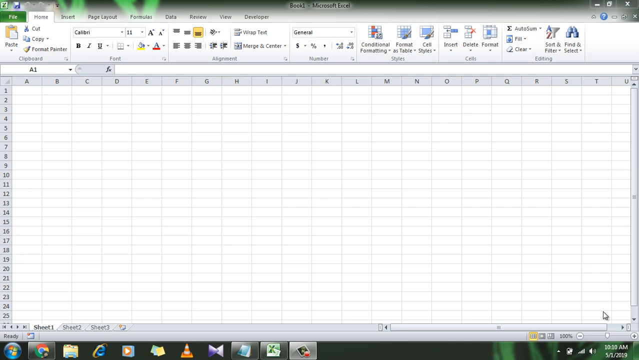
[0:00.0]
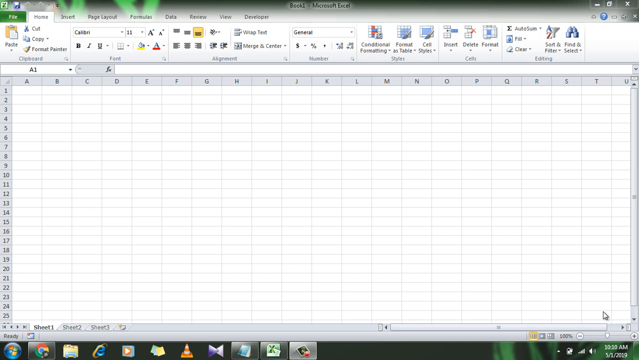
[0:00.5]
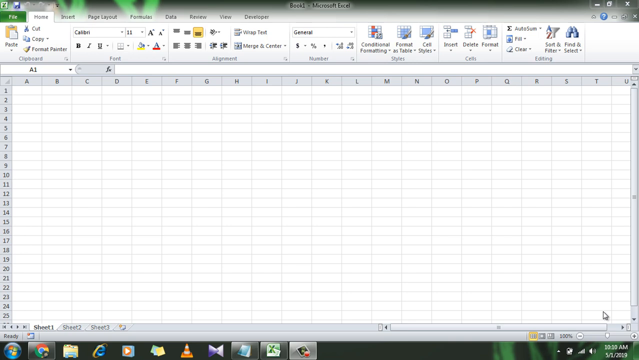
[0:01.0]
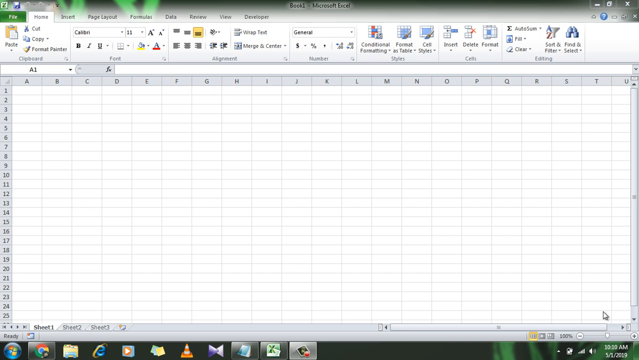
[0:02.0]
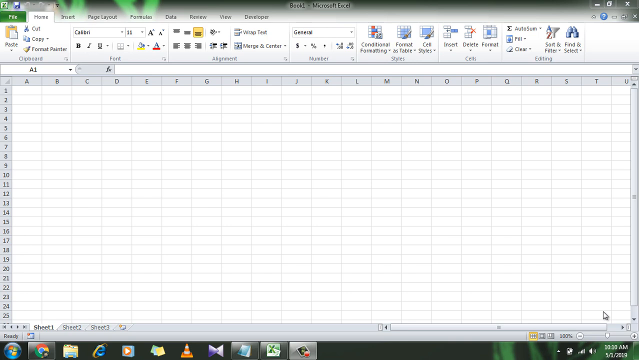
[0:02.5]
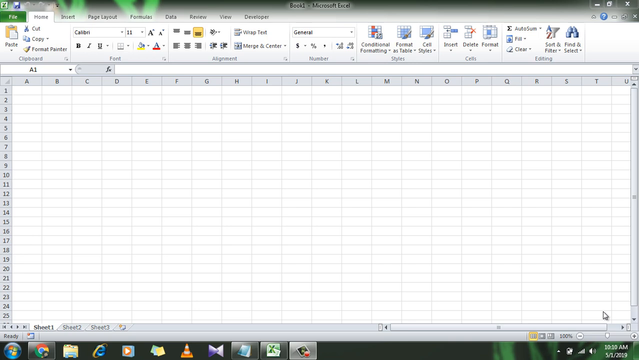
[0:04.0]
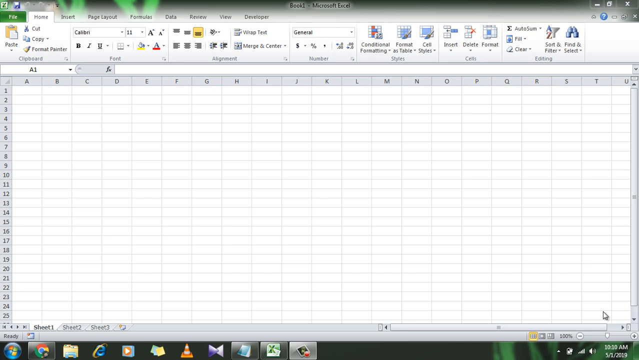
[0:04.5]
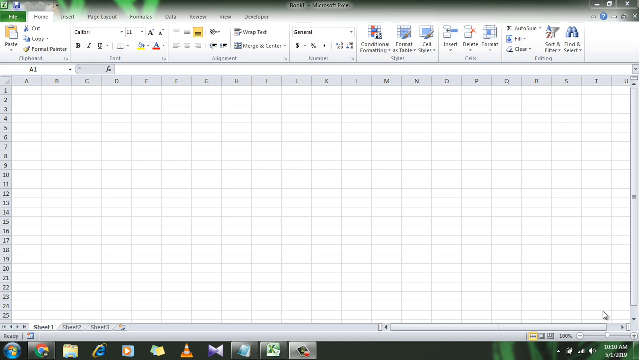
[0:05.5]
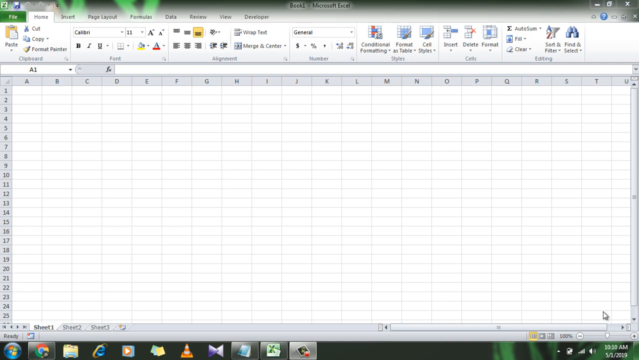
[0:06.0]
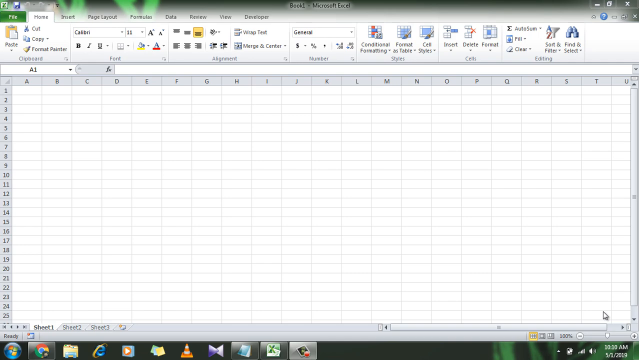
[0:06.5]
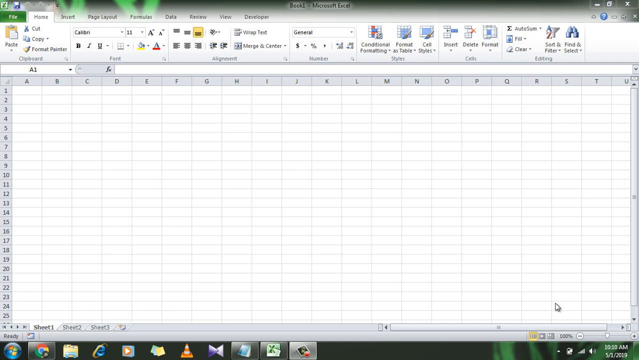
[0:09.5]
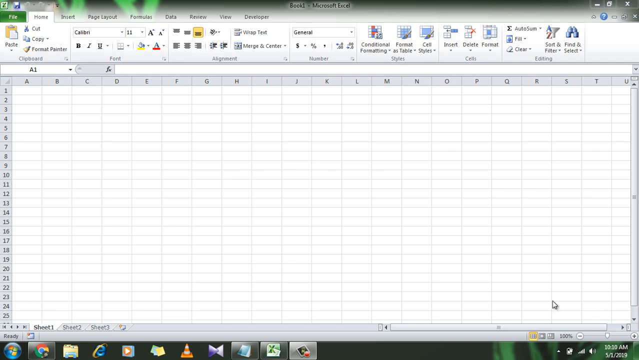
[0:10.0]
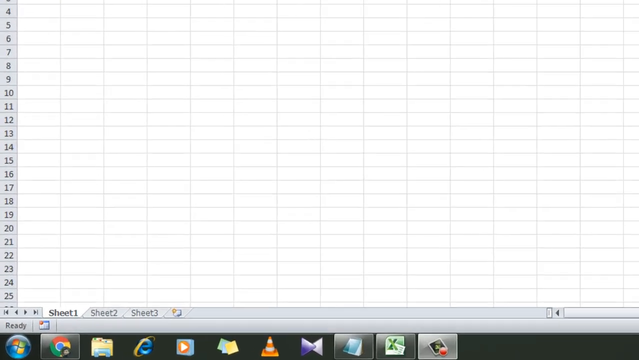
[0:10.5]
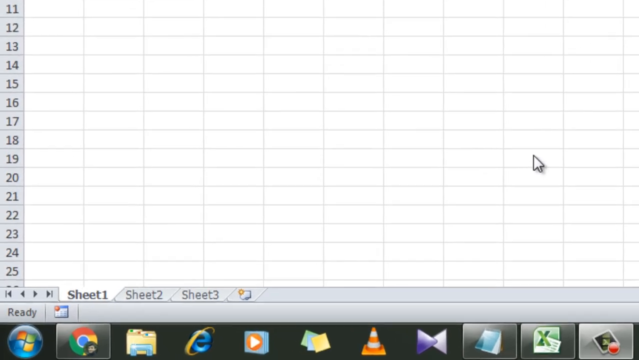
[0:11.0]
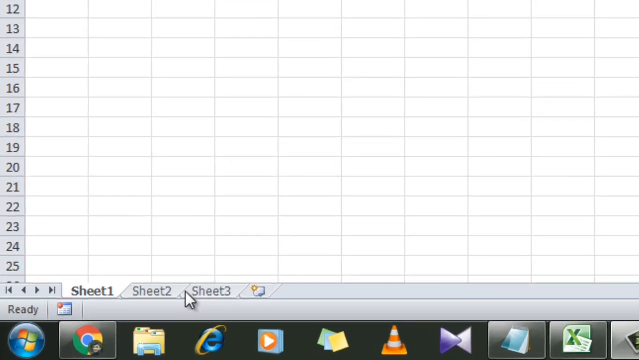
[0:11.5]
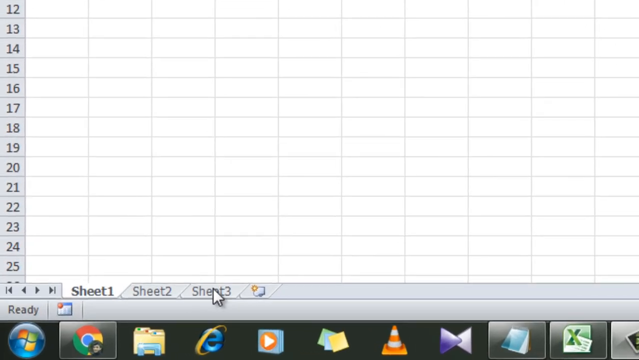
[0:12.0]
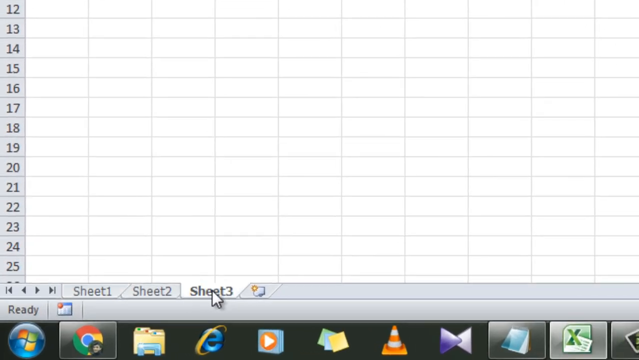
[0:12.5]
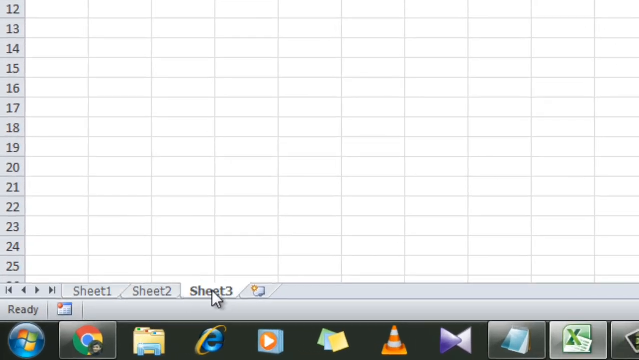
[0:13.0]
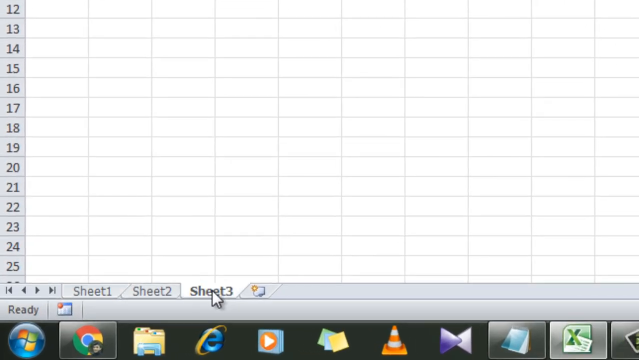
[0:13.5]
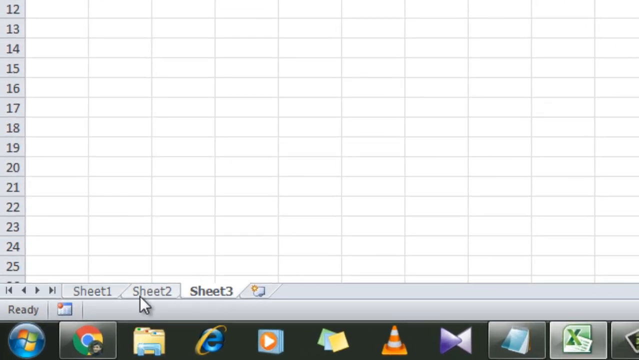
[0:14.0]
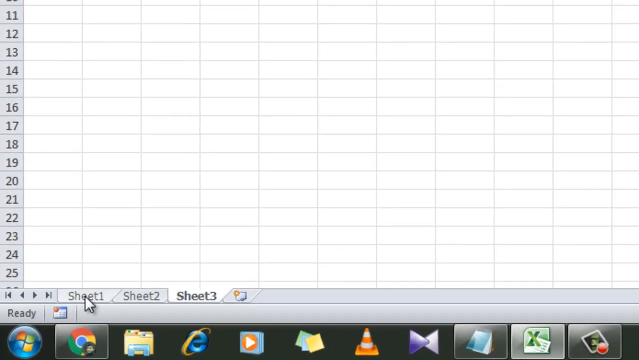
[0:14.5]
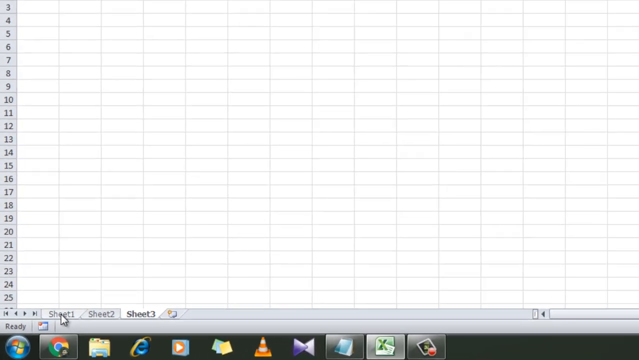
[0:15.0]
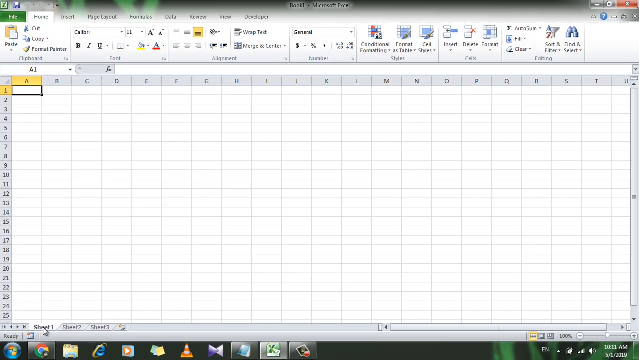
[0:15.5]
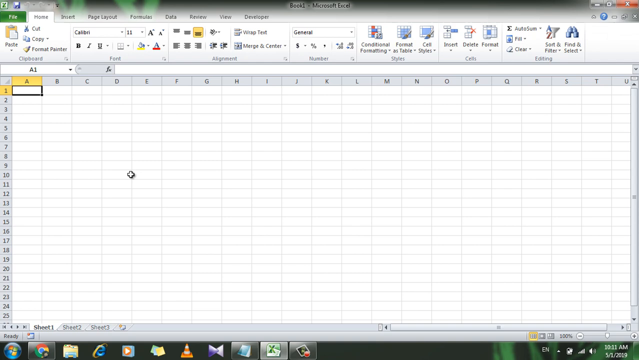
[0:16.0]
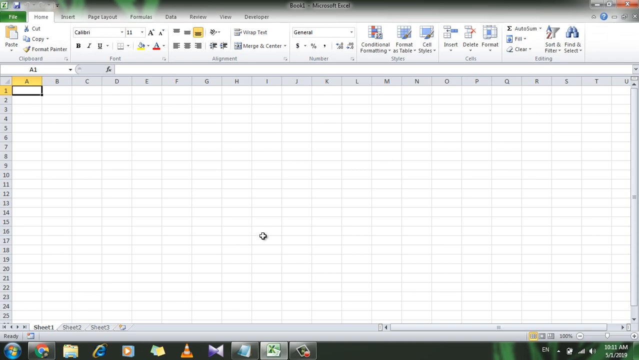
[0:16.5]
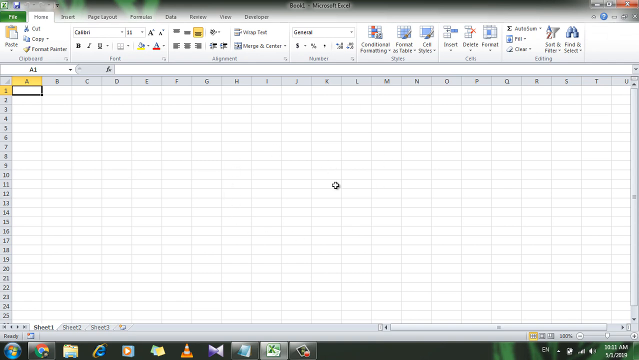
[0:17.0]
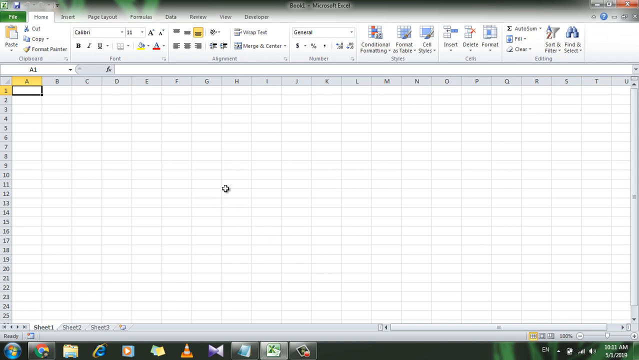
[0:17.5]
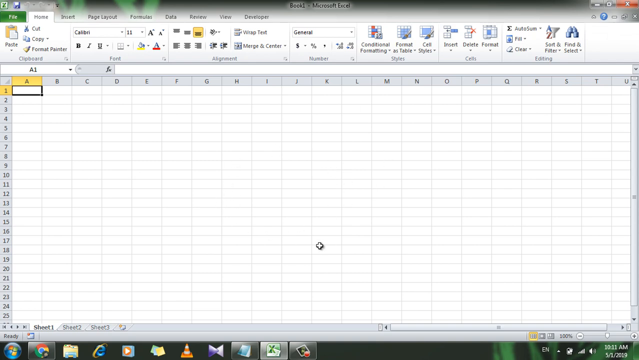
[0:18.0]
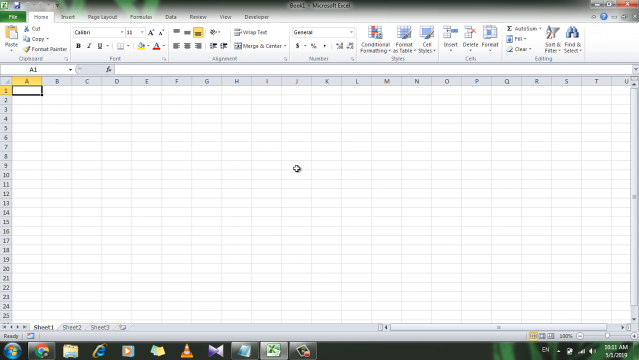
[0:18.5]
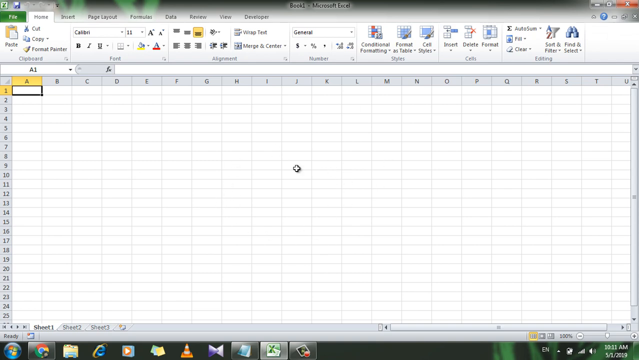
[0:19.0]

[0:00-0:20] A Microsoft Excel page is open on a computer. The shot is still at first, then zooms in a little to the bottom left of the screen, showing three sheets on the page: Sheet 1, Sheet 2 and Sheet 3. The person controlling the screen moves the cursor over Sheet 3 and seems to click it, then clicks back to Sheet 1, showing that it can switch between sheets, almost like different tabs. After the click on Sheet 1 the view zooms out, and the person seems to circle the cursor around the screen to show off the page. They appear to be getting ready to do some work on the Excel sheet, which has 25 columns going from A to U.